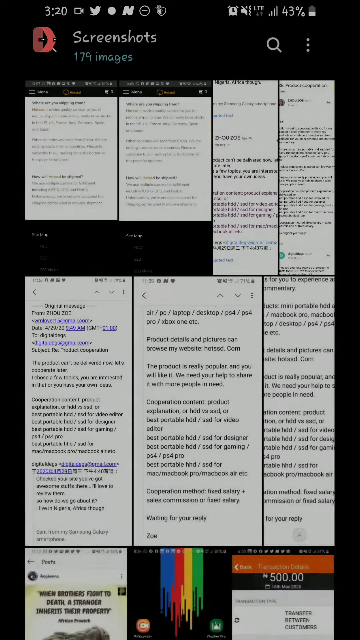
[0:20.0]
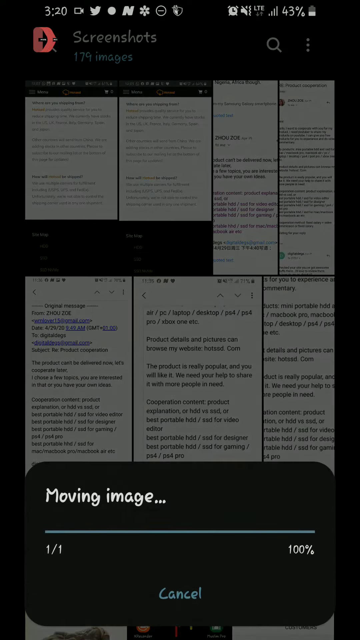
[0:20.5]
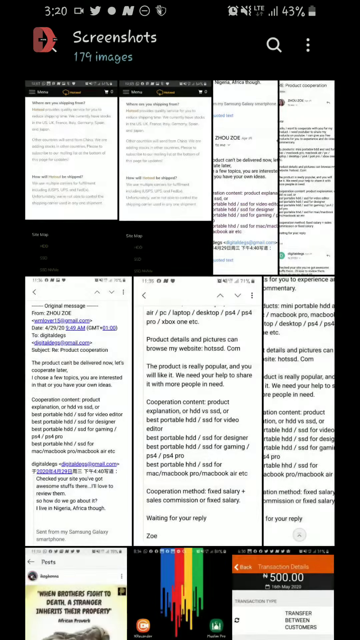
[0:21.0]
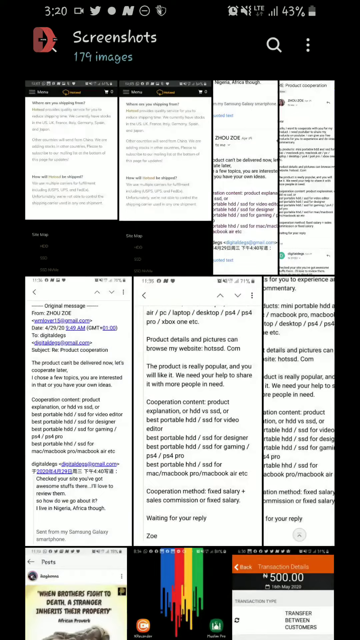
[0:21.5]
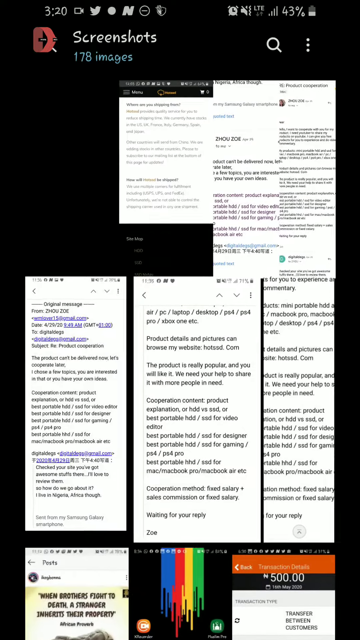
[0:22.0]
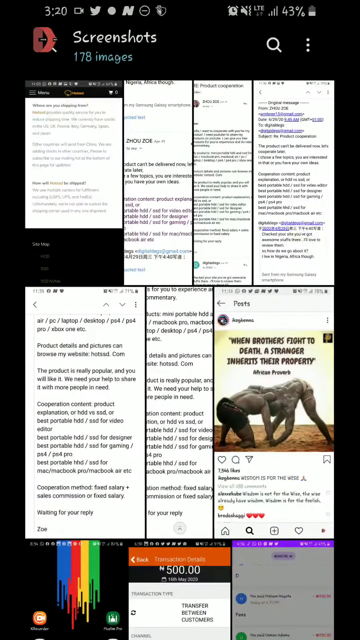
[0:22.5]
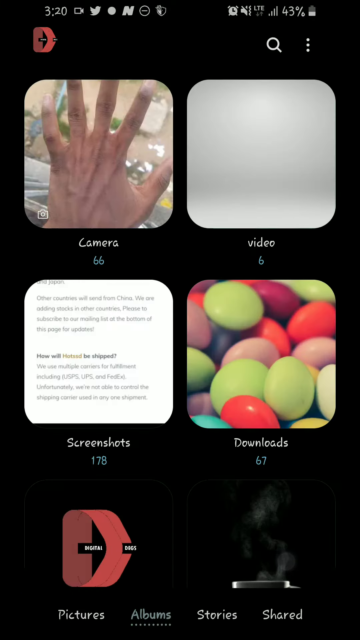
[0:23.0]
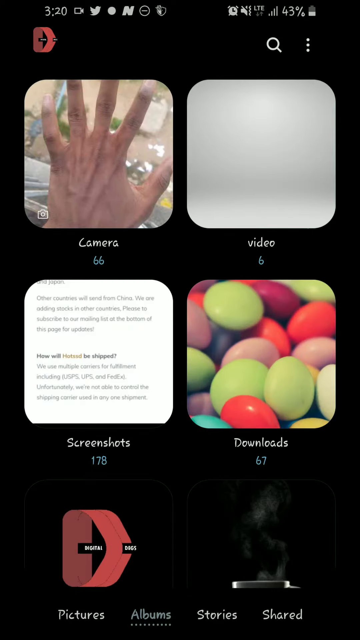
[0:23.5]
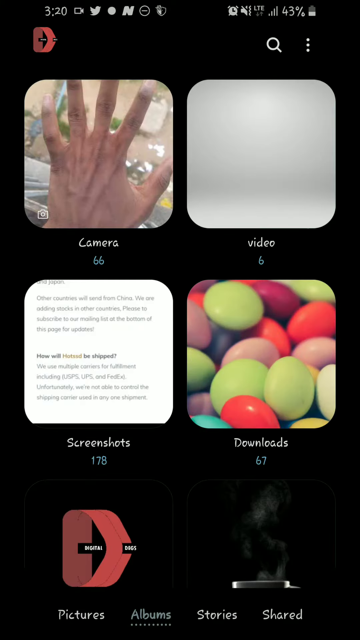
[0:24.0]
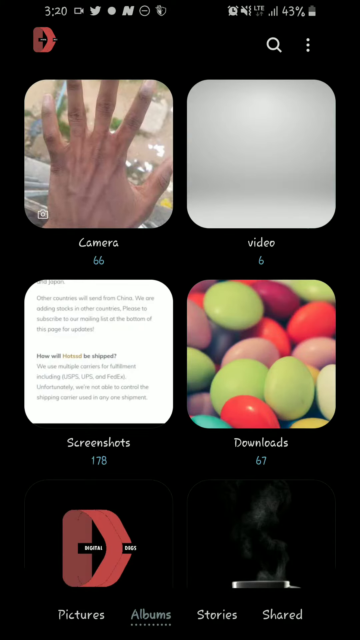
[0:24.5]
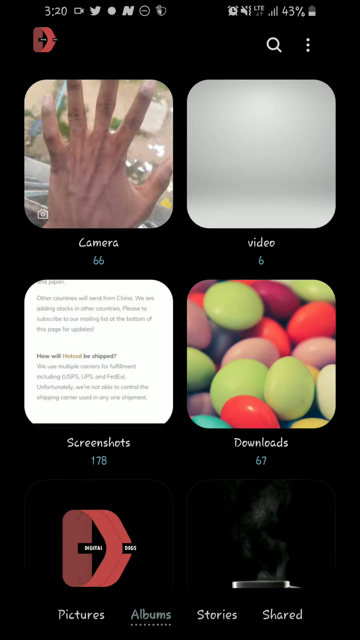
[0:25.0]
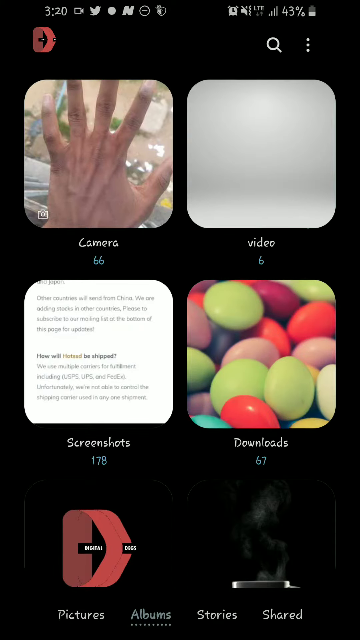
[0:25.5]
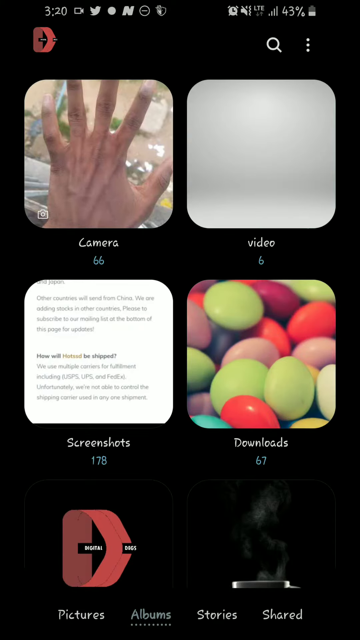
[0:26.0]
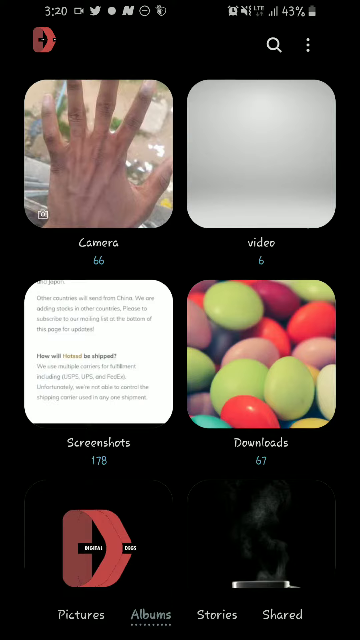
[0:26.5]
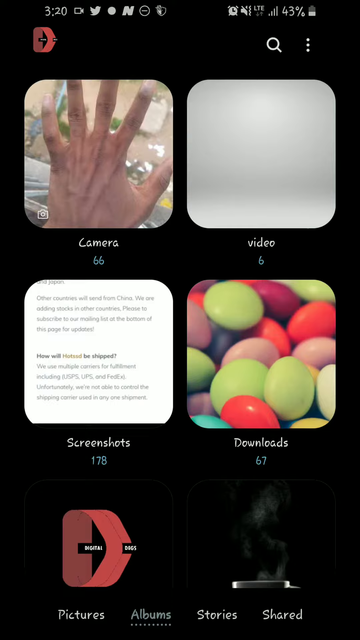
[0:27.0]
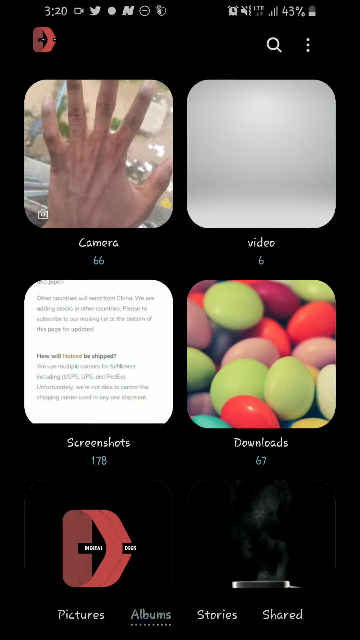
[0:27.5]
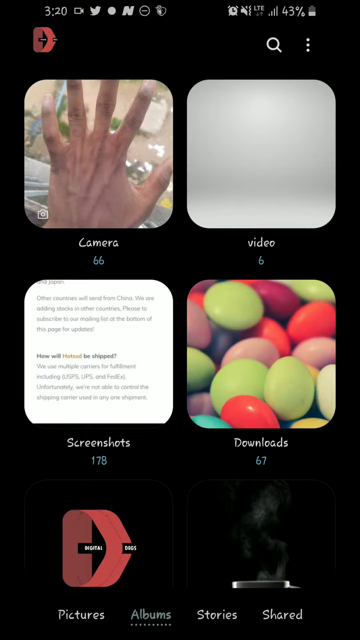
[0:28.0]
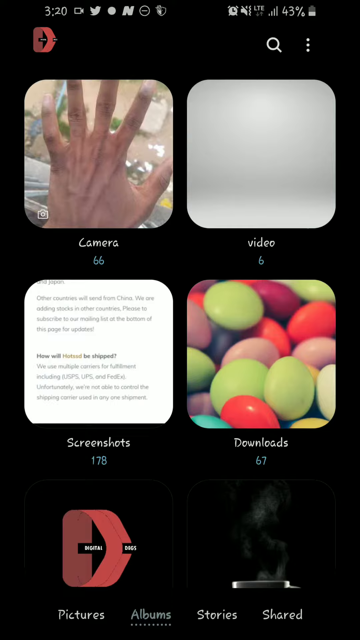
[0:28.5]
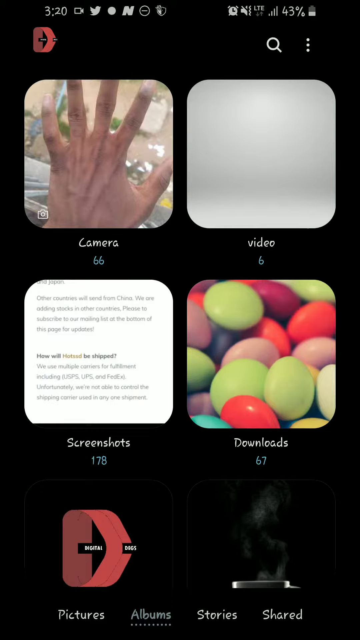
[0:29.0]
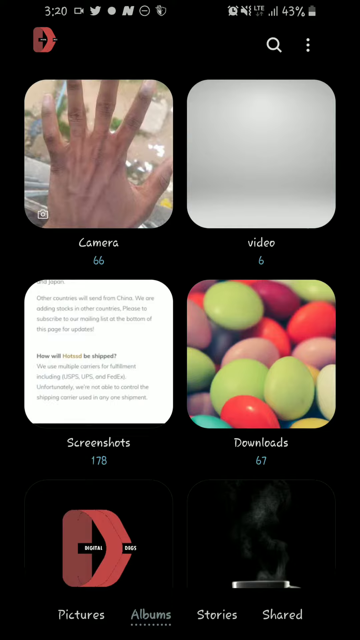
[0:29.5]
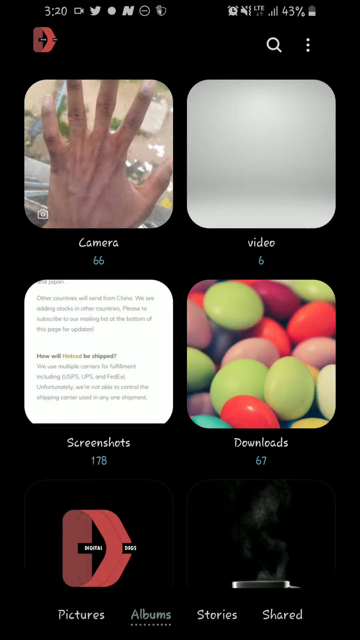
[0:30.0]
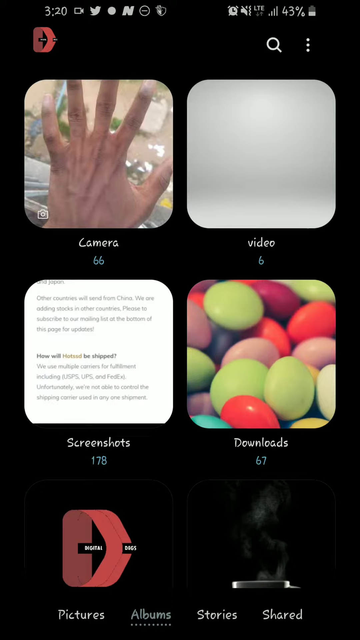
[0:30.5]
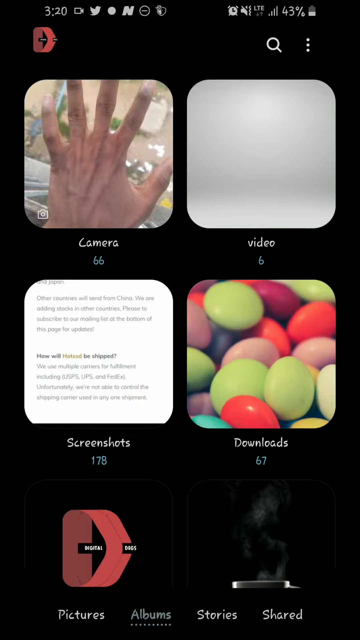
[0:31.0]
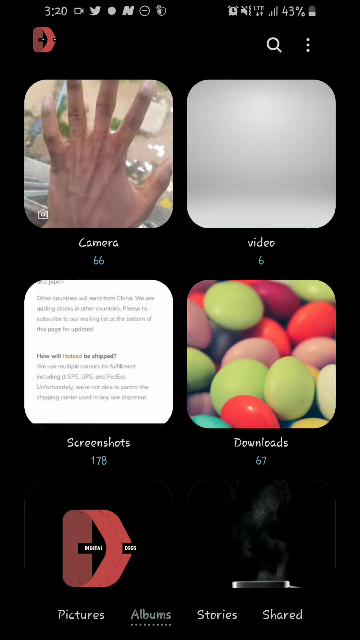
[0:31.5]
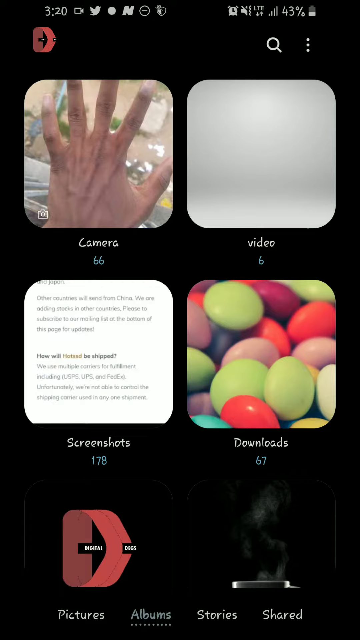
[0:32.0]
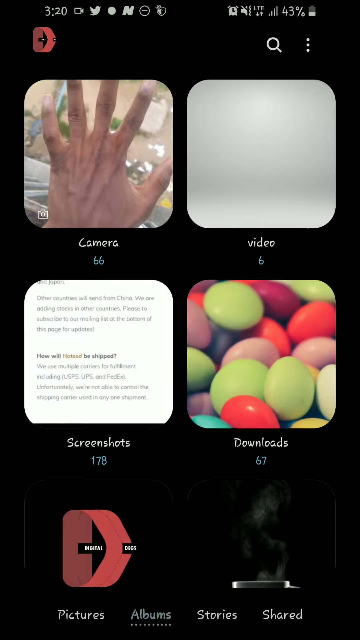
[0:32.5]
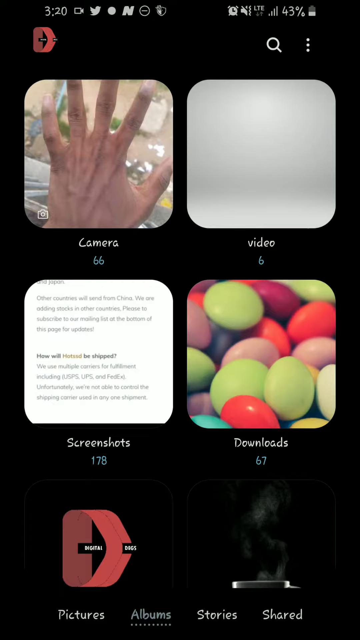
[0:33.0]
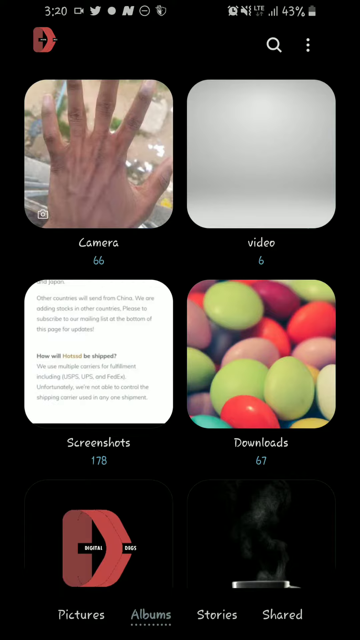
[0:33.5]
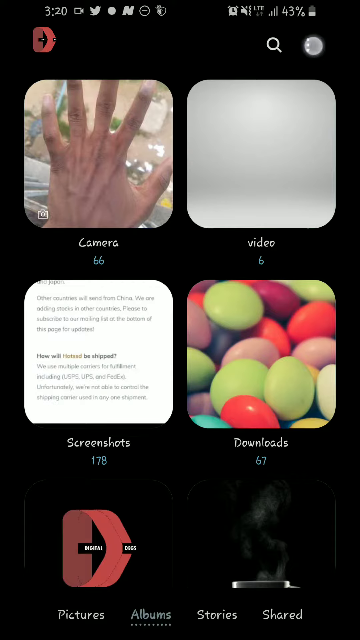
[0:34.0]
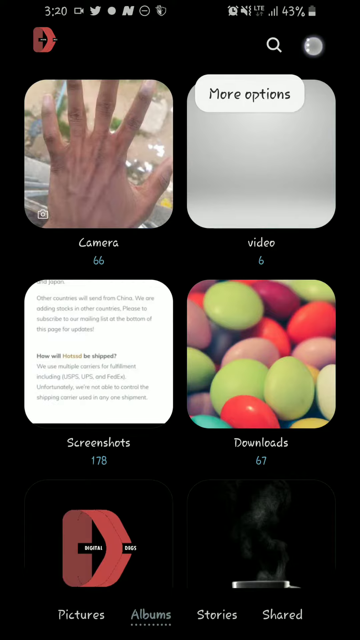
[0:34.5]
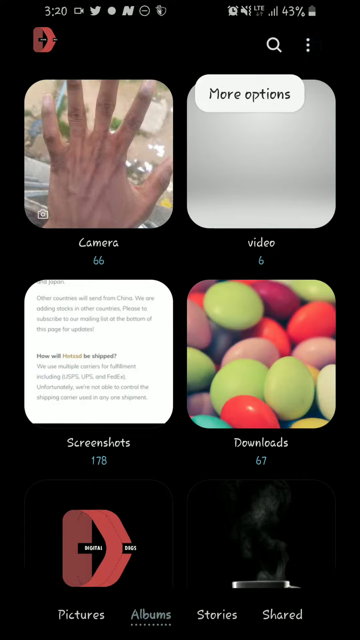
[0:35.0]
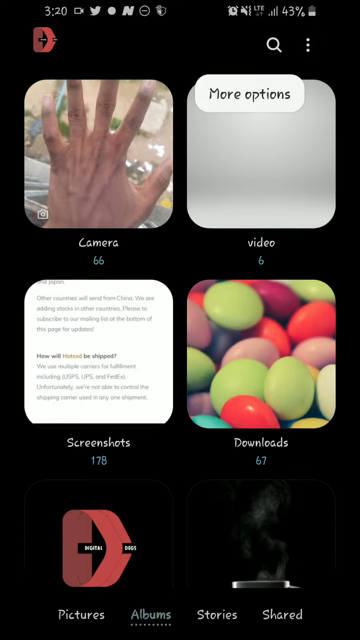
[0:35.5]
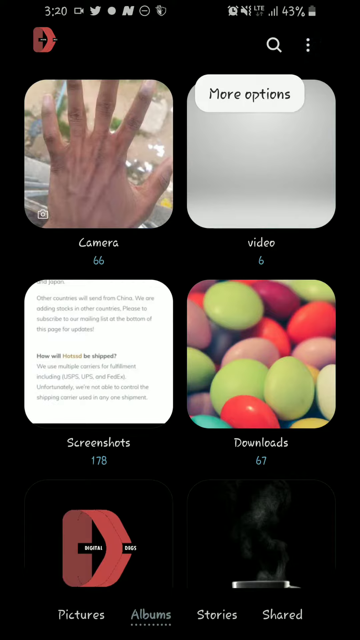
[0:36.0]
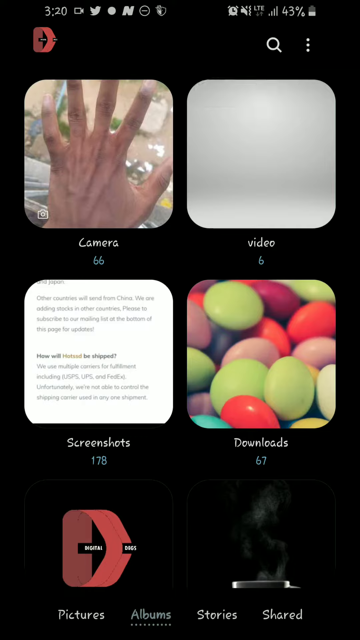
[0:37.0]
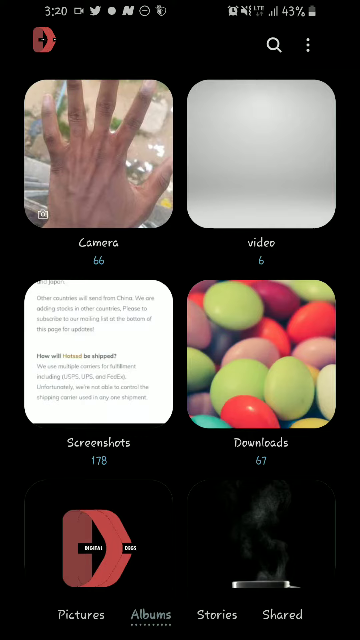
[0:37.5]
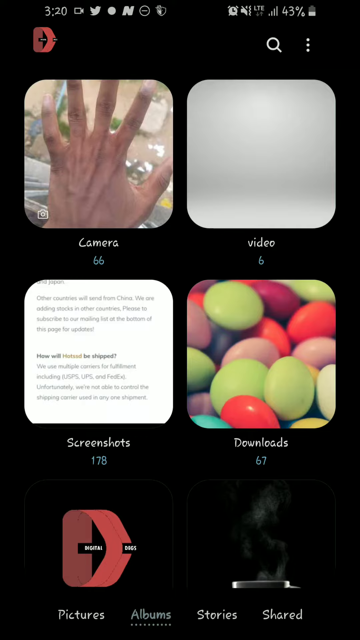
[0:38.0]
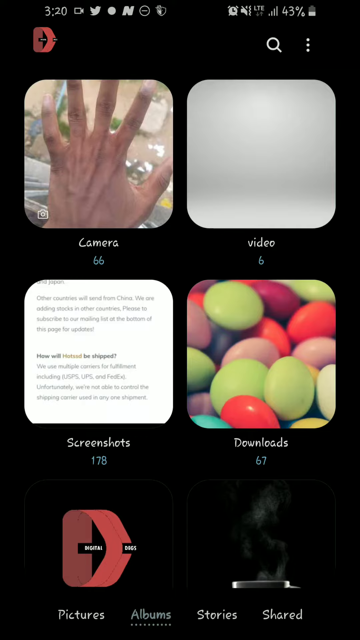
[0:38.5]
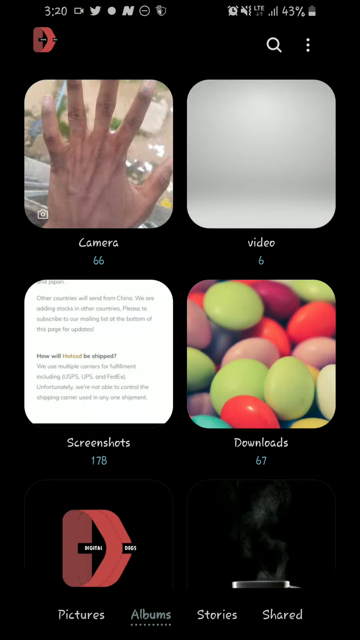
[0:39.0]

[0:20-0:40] After deleting the screenshot, he goes back to the main menu of the gallery, which shows a few folders: camera, video, screenshots, downloads and a few others. The screenshots page holds about 179 screenshots, but he does not stay on that screen. He focuses on the more options button at the top right and taps on the three dots.